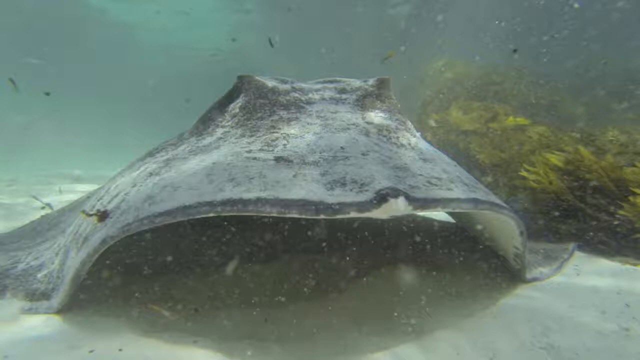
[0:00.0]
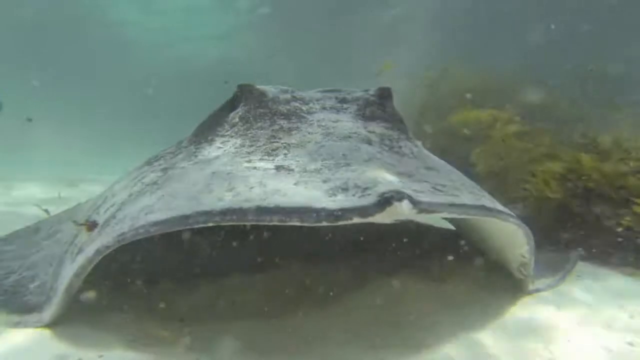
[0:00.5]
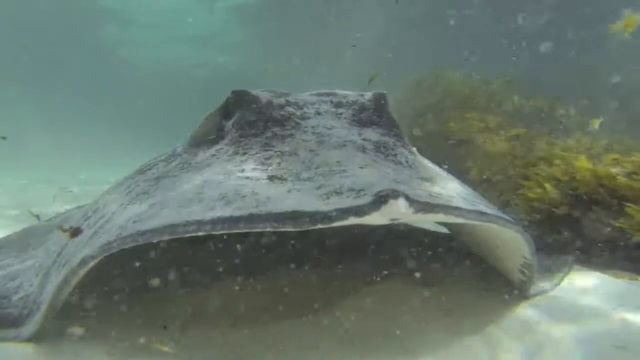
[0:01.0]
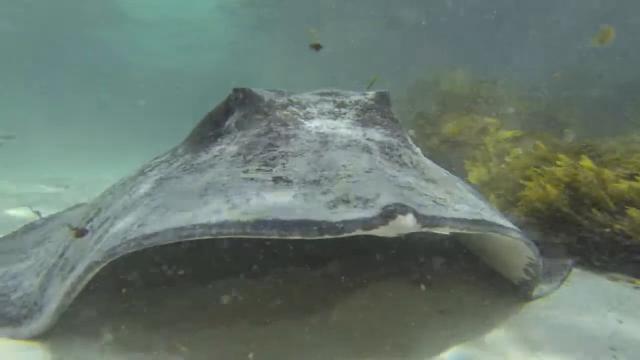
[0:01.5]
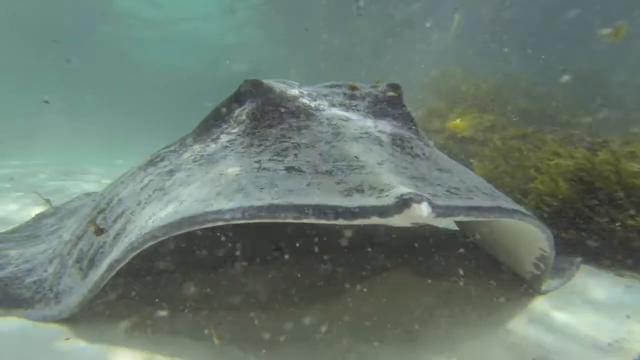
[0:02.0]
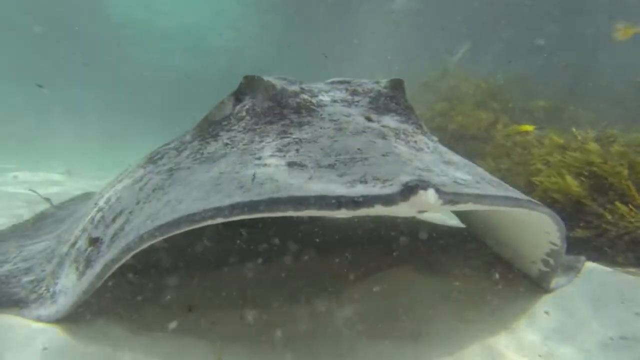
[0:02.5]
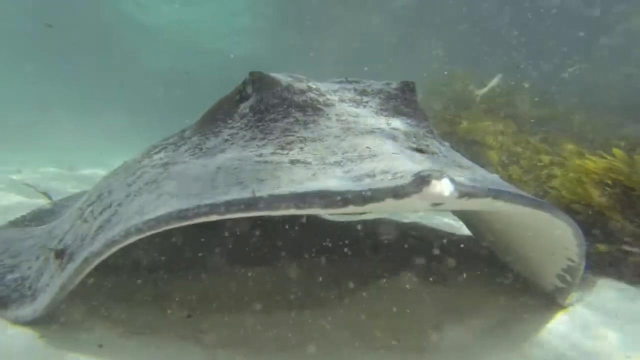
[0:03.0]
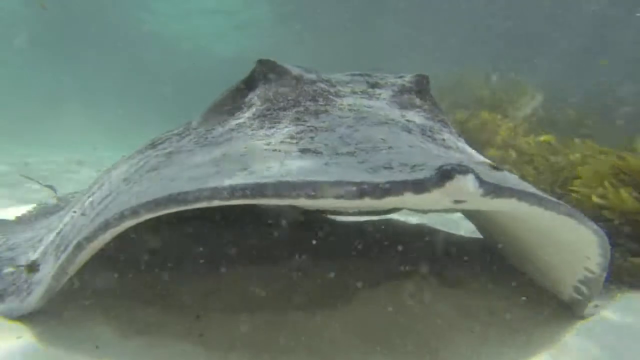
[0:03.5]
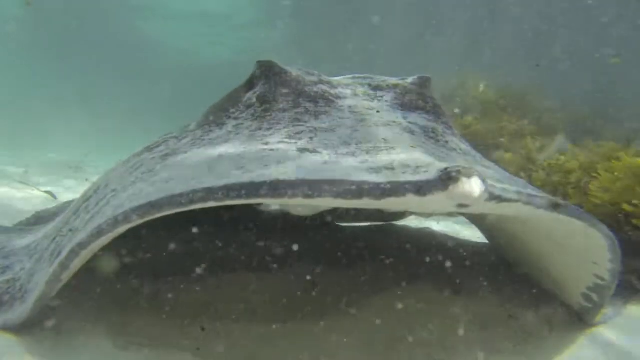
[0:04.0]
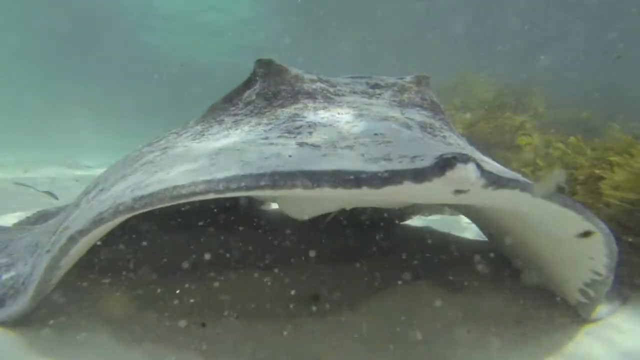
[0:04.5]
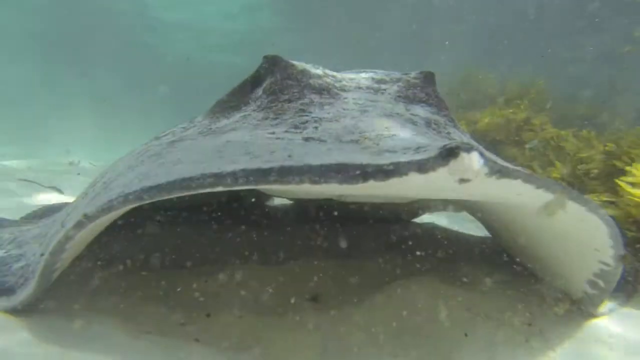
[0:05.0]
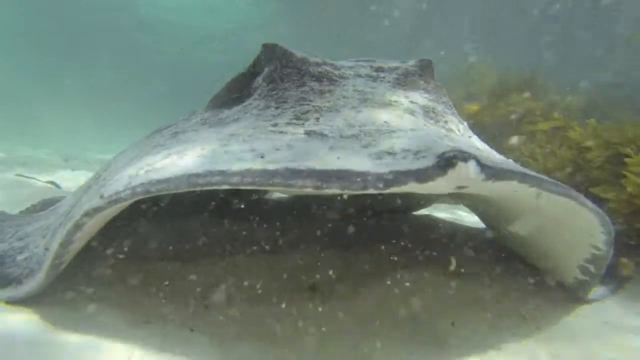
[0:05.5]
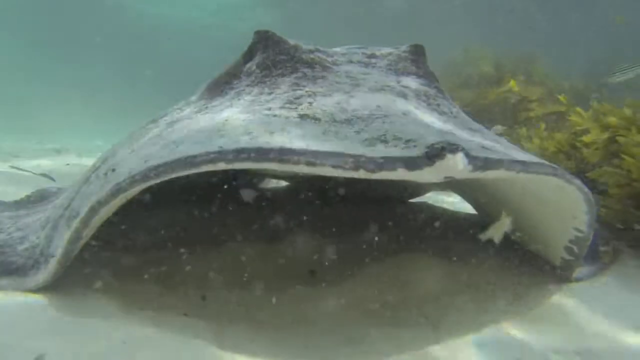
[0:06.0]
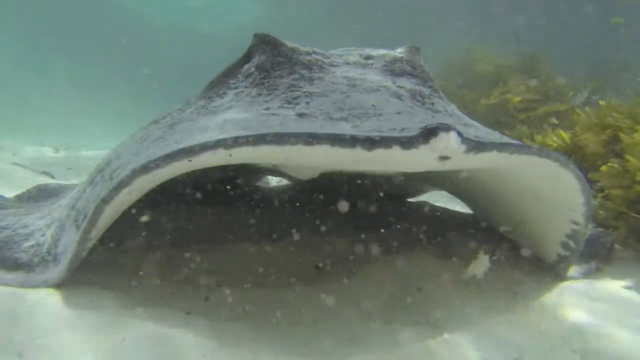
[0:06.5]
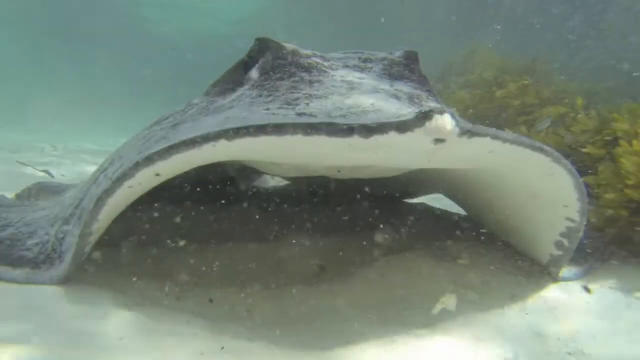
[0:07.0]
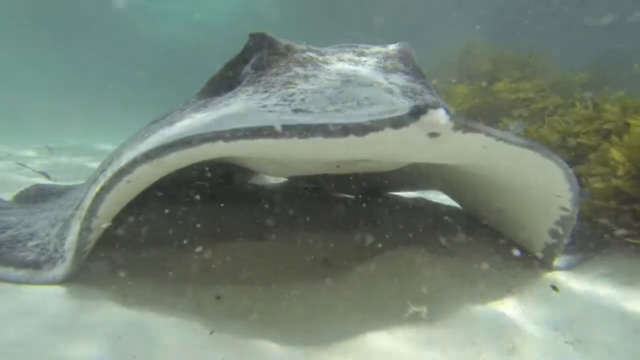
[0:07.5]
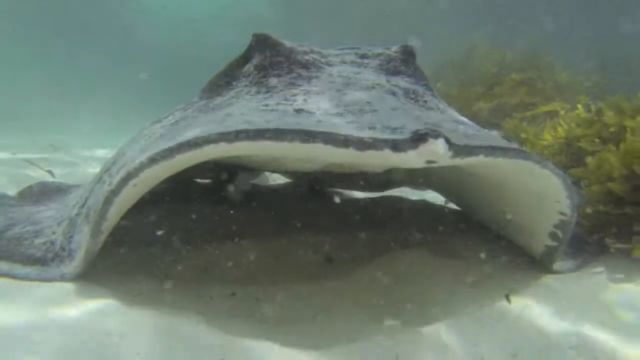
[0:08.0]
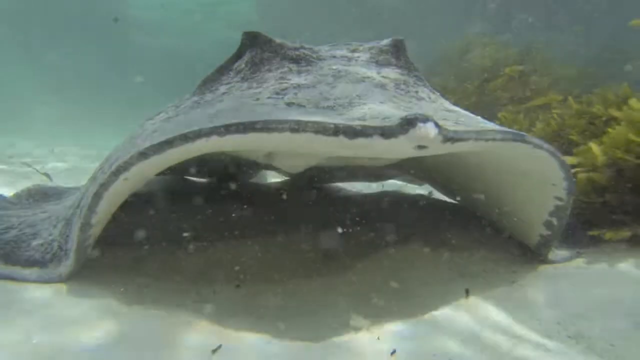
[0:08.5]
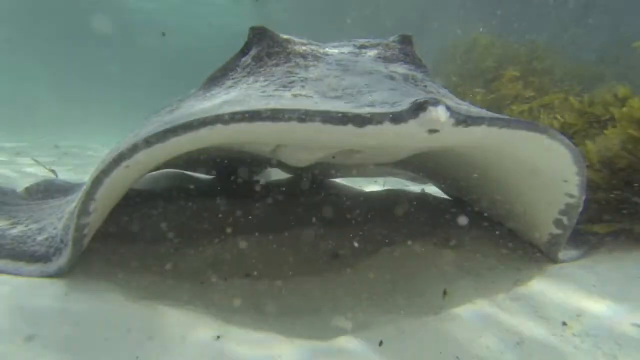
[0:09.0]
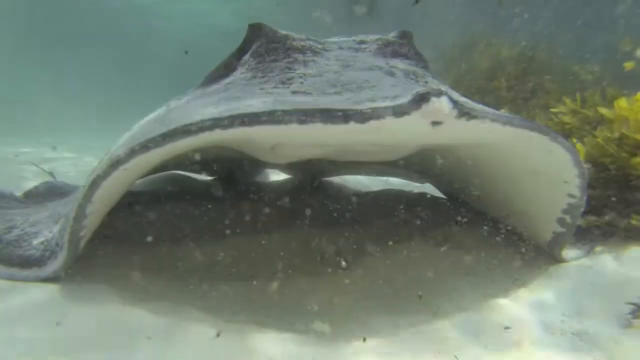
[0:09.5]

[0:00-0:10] A close-up shows a fish with a wide body and sort of black-colored skin. It actually looks more like a stingray, as its body is rather flat and has wings on its sides. It looks like it has two little horns on top, which make it almost look like it has a frog's head. The stingray's body sort of bobs up and down a little, and water particles or food stuff sort of billow under its opening. There appear to be some green mossy plants on the right side of its body.